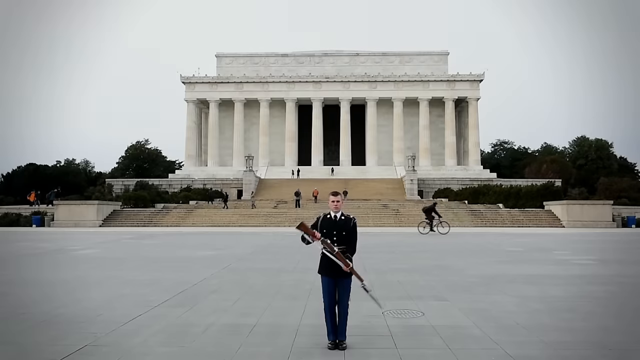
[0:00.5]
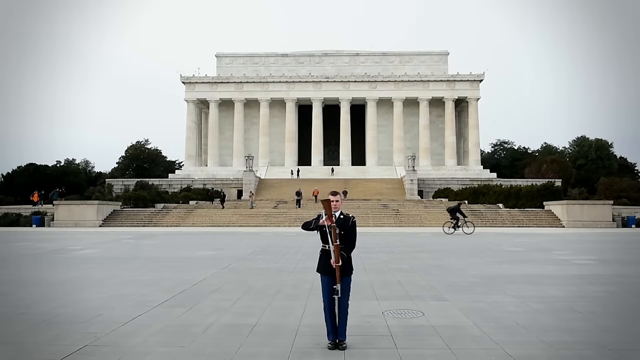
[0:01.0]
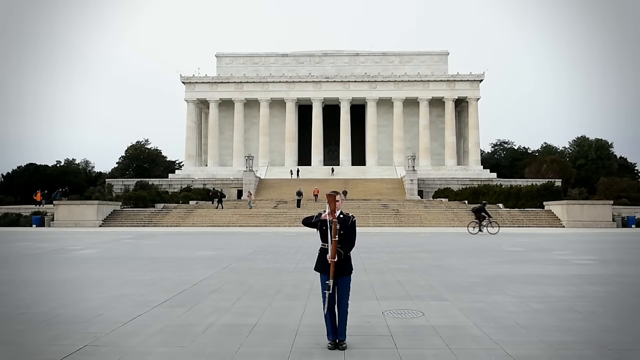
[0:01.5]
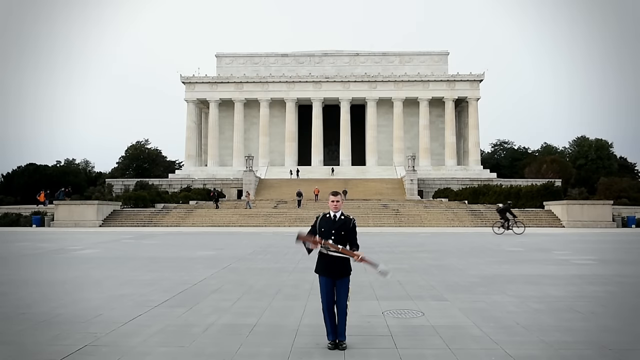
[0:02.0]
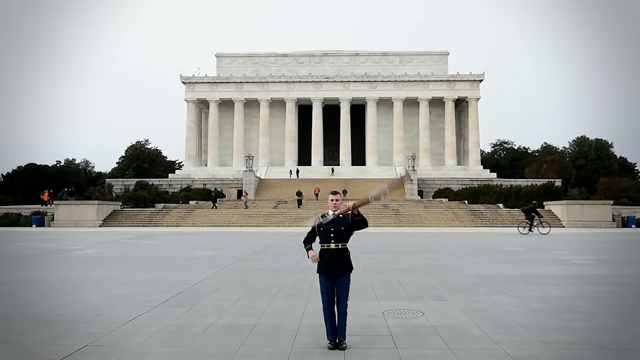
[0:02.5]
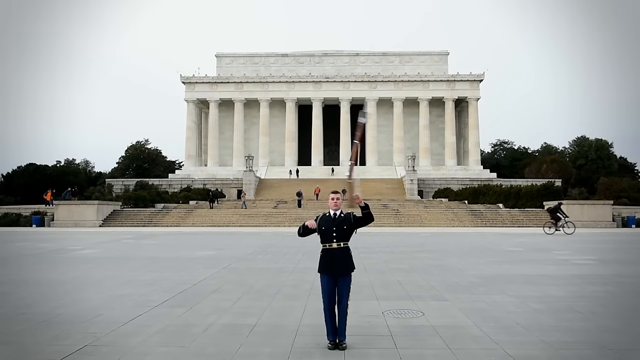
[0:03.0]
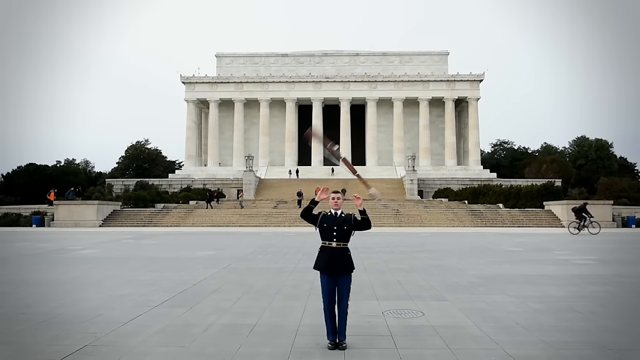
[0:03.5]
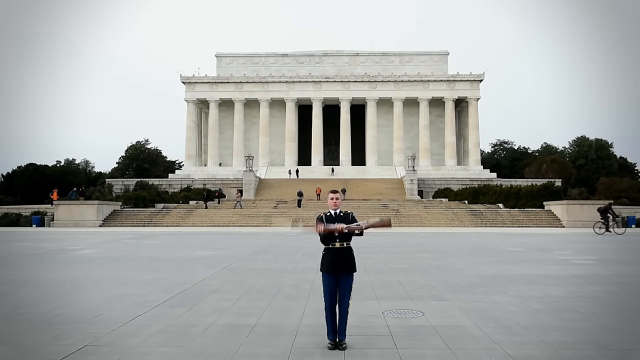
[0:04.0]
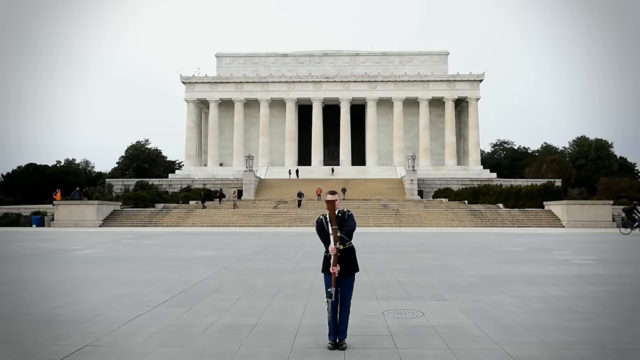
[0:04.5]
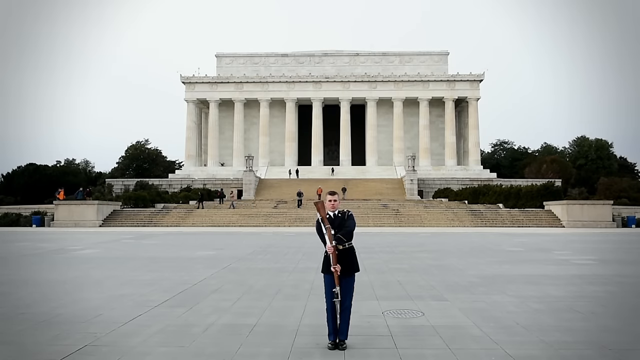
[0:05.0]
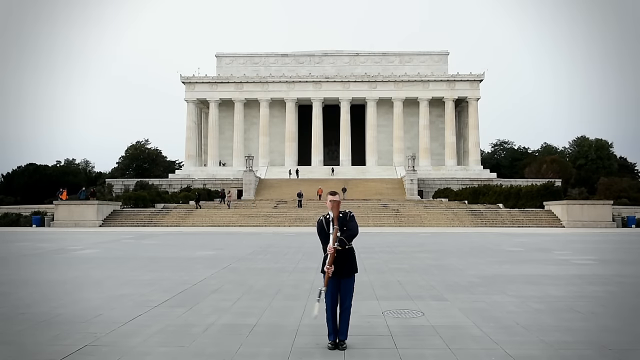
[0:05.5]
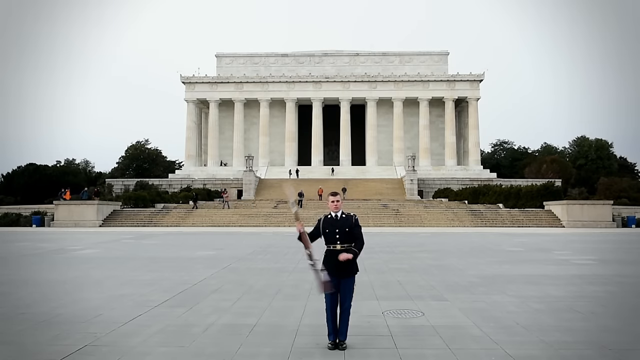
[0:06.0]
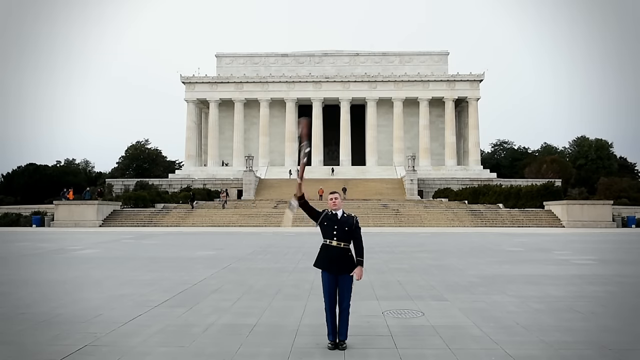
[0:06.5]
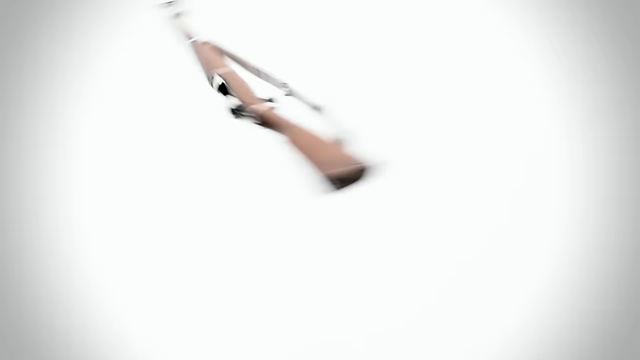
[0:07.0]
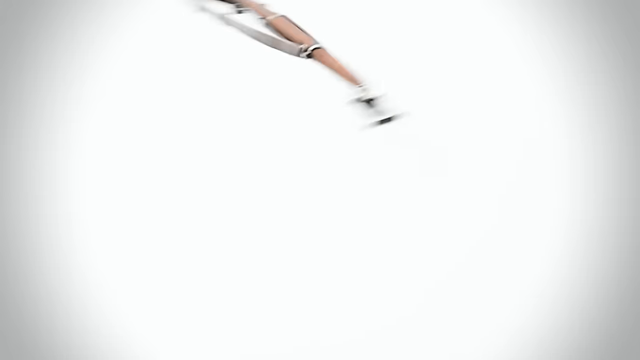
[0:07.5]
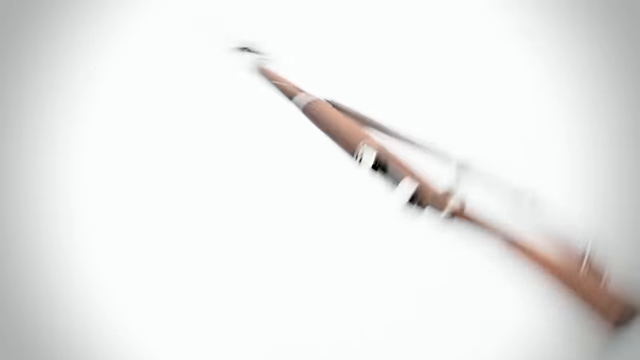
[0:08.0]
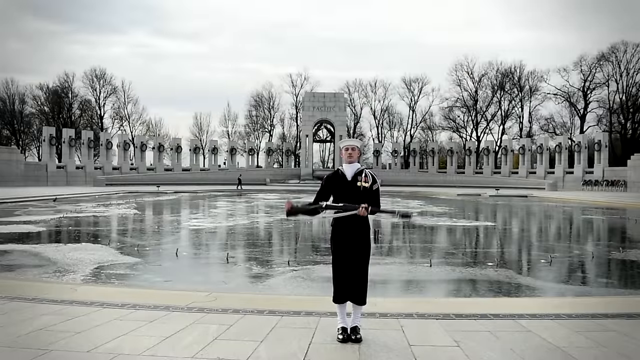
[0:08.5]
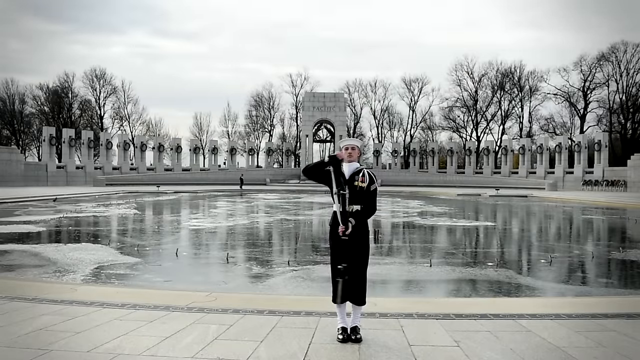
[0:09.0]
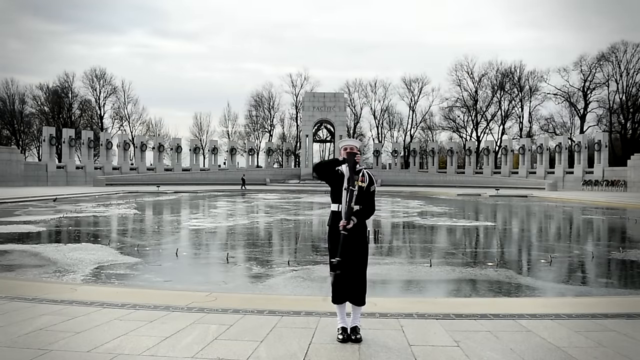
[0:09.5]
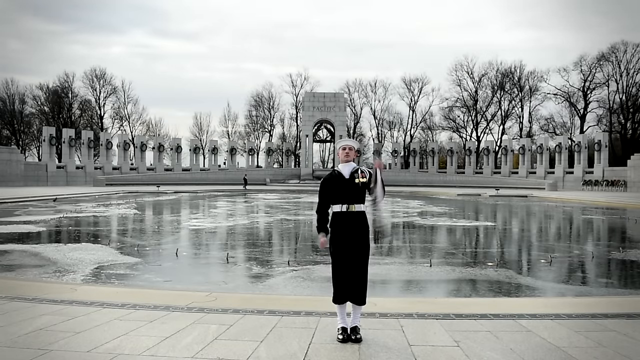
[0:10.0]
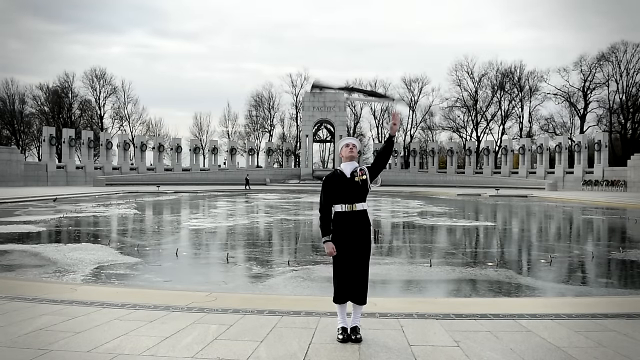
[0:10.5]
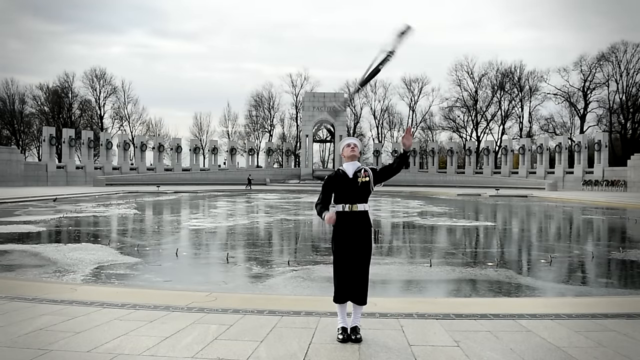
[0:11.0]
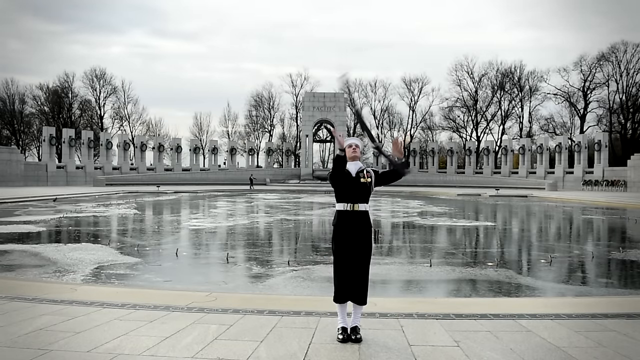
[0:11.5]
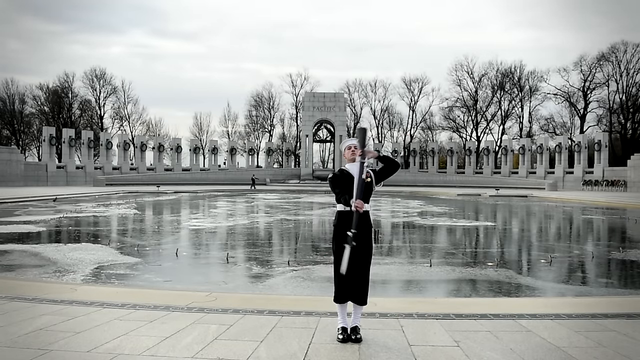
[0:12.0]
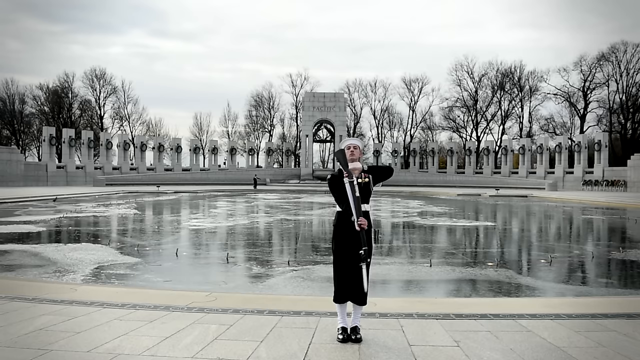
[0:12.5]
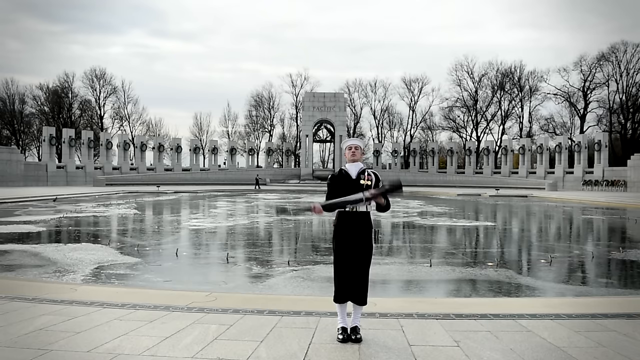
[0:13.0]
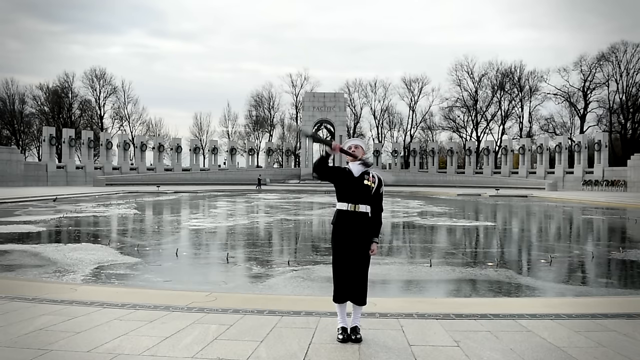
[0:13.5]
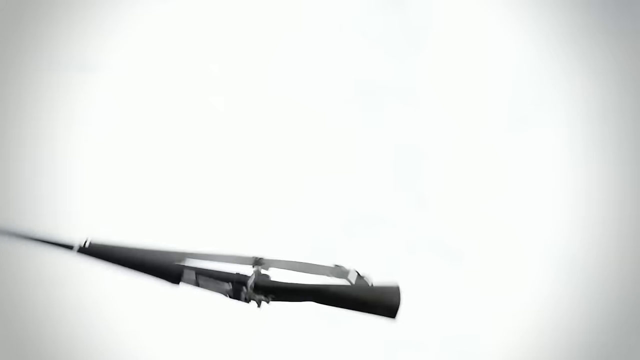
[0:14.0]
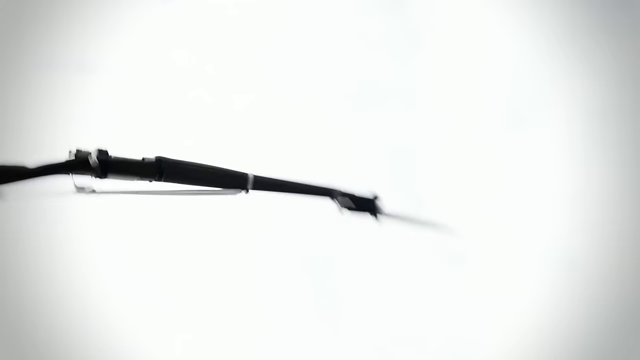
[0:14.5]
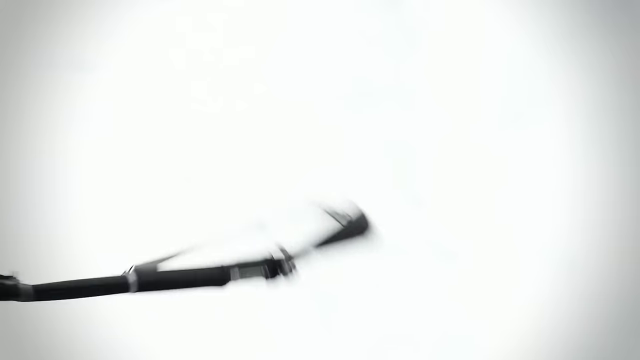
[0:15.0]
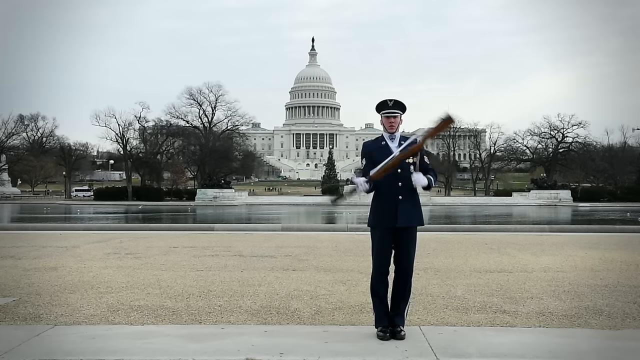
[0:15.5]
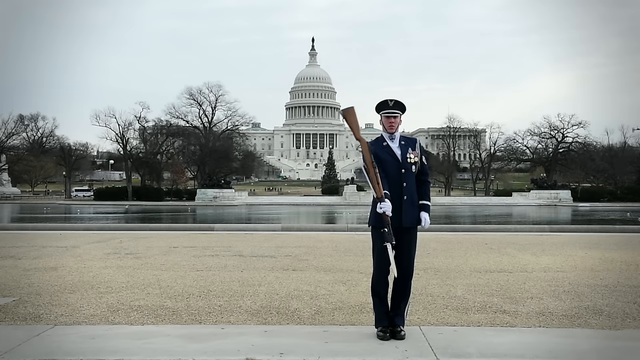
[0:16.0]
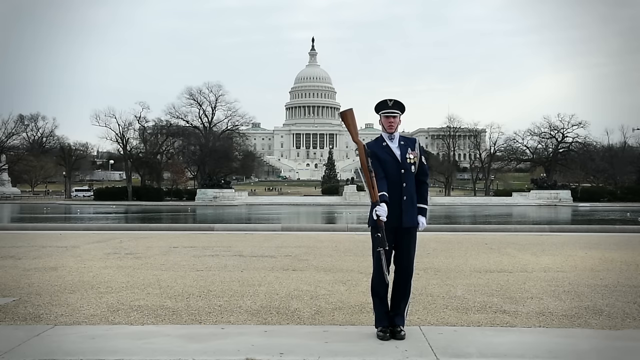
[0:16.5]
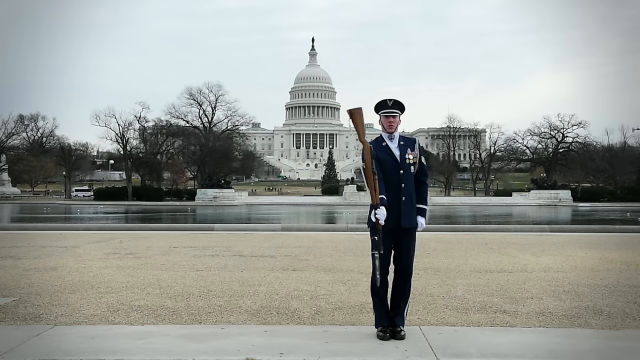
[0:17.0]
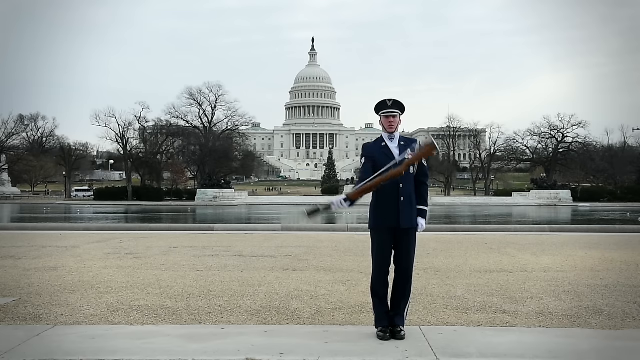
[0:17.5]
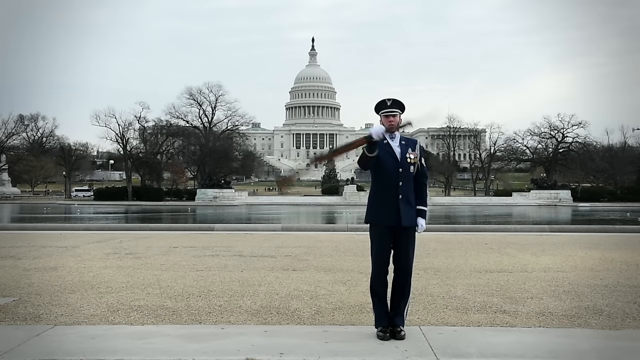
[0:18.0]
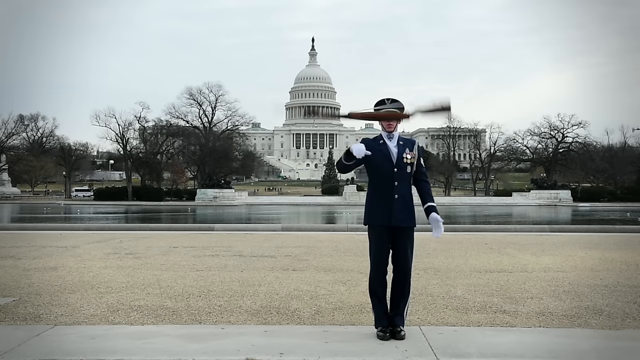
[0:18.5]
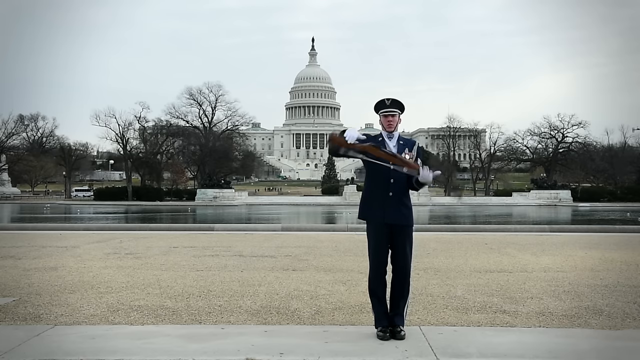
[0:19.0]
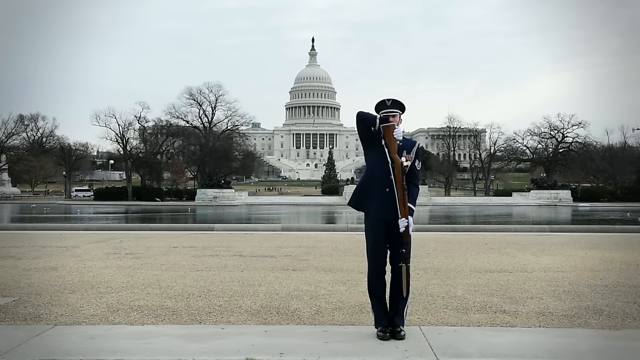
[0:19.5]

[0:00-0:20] A soldier performs with a rifle just in front of a white building, moving the rifle through the air. The location changes from time to time: first there is the white house, then what seems to be an open place, and then a different white house. Across the three places, three people throw their weapons into the air, spin them around, and catch them.